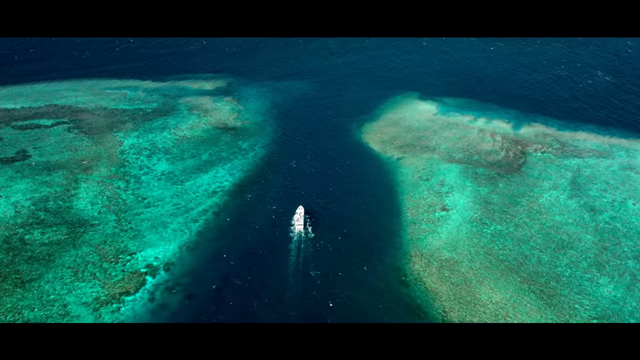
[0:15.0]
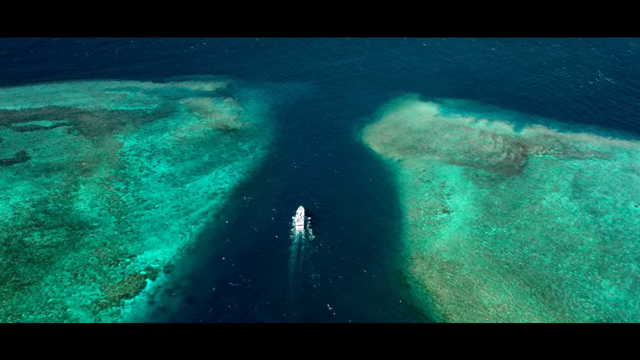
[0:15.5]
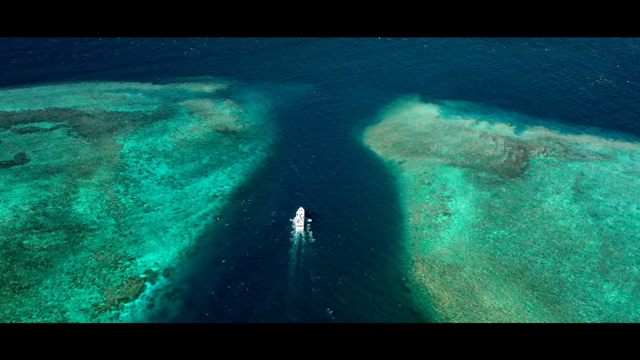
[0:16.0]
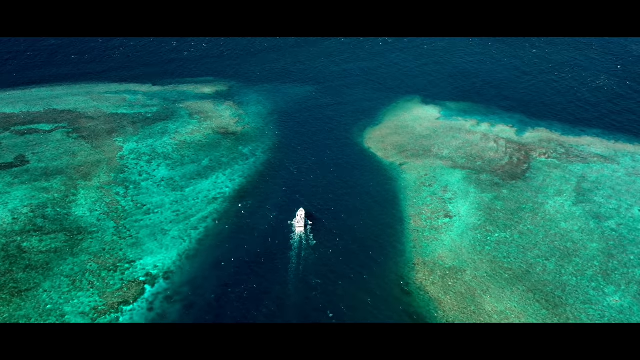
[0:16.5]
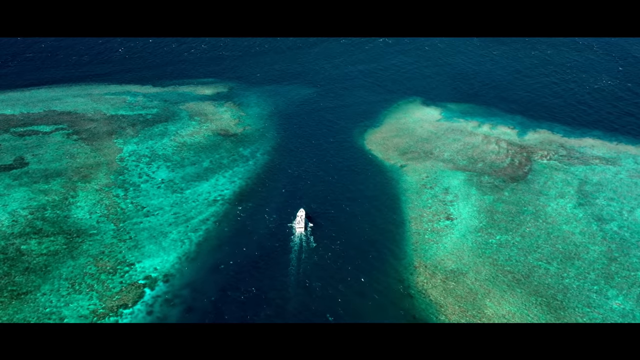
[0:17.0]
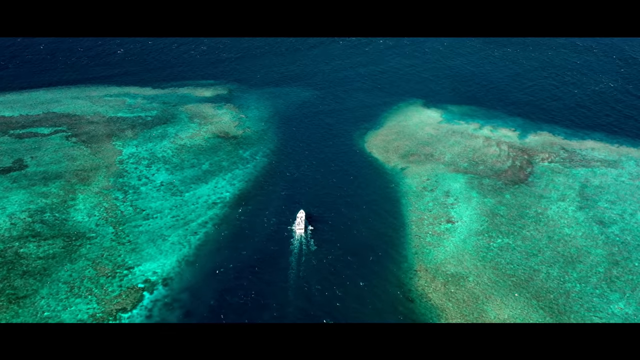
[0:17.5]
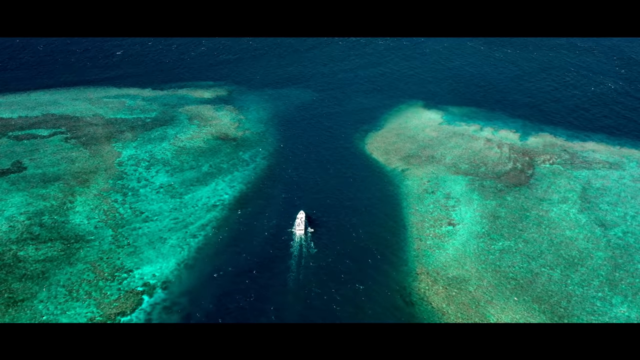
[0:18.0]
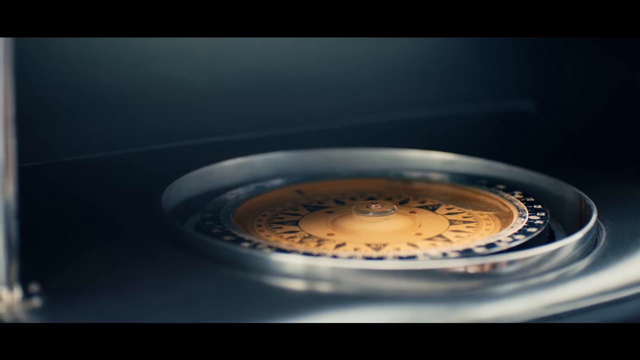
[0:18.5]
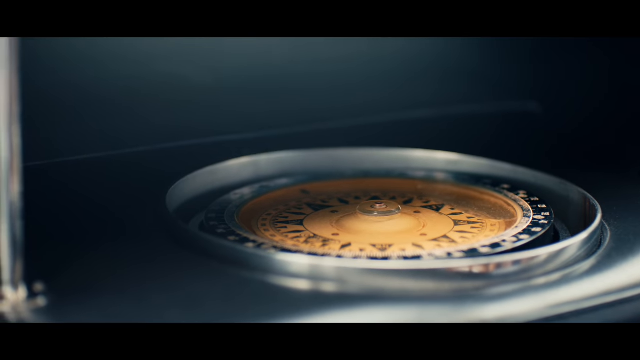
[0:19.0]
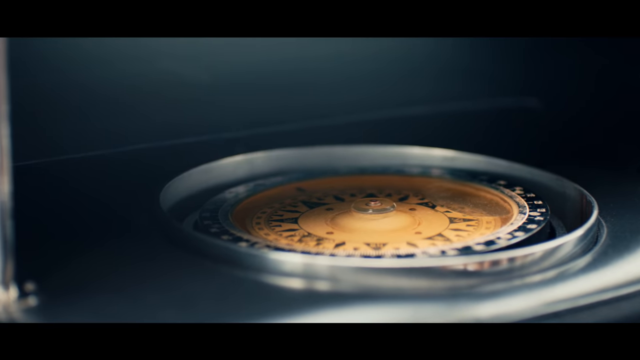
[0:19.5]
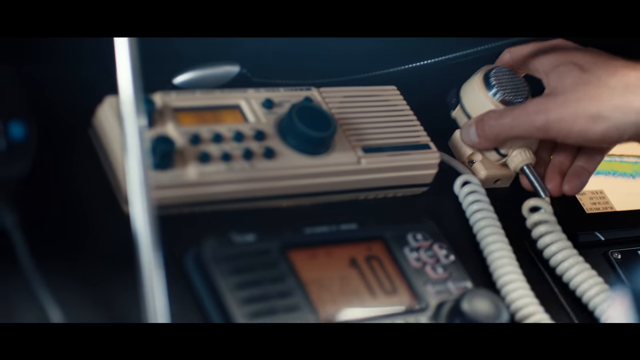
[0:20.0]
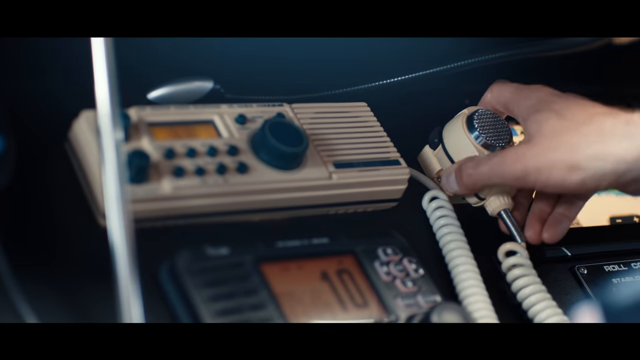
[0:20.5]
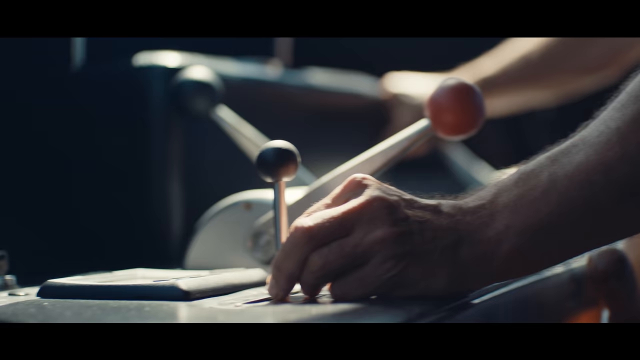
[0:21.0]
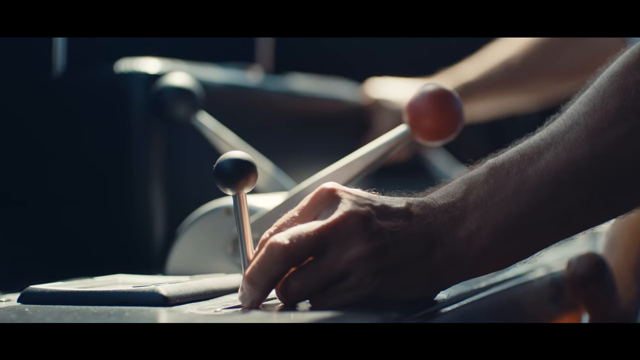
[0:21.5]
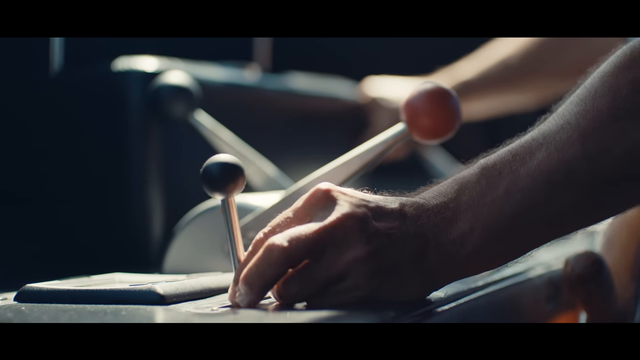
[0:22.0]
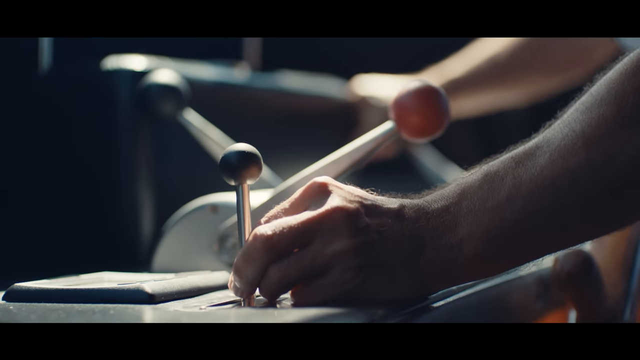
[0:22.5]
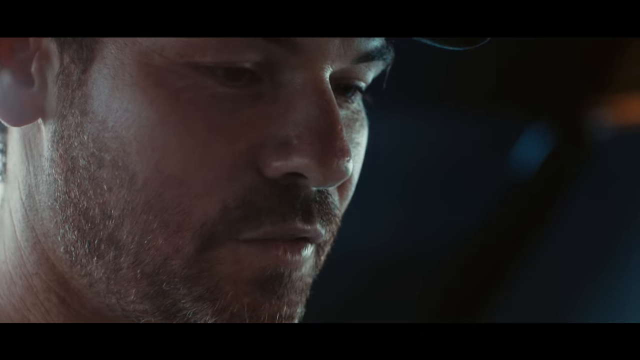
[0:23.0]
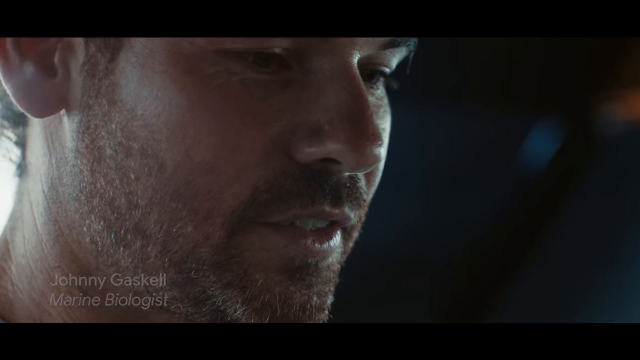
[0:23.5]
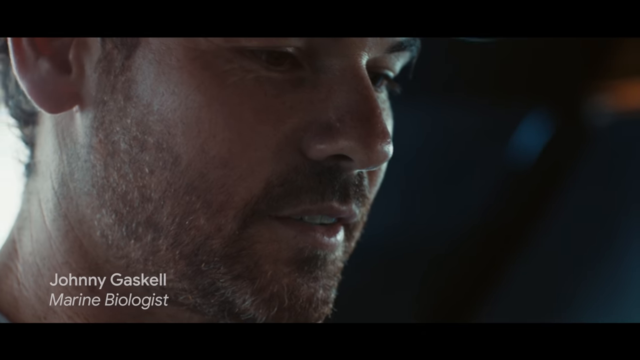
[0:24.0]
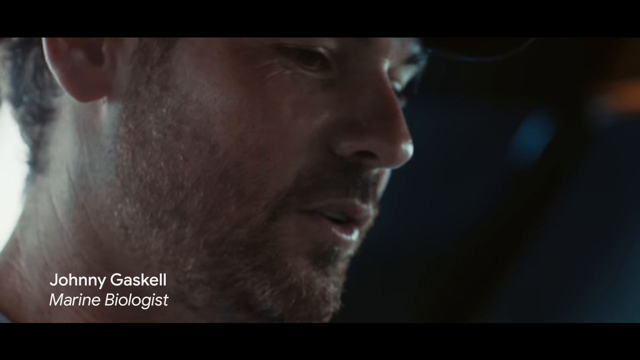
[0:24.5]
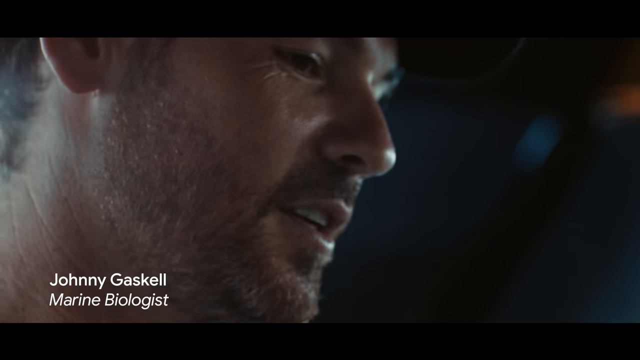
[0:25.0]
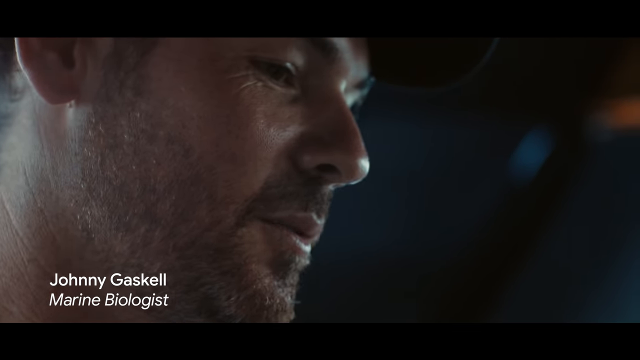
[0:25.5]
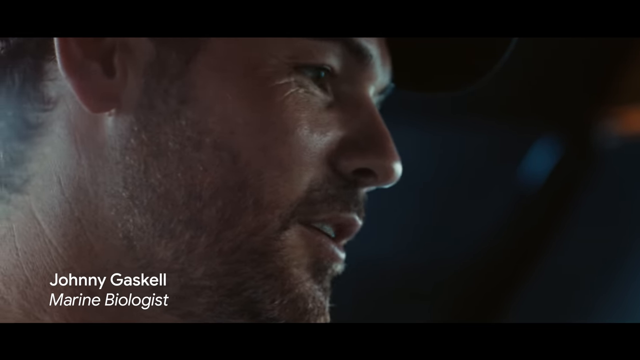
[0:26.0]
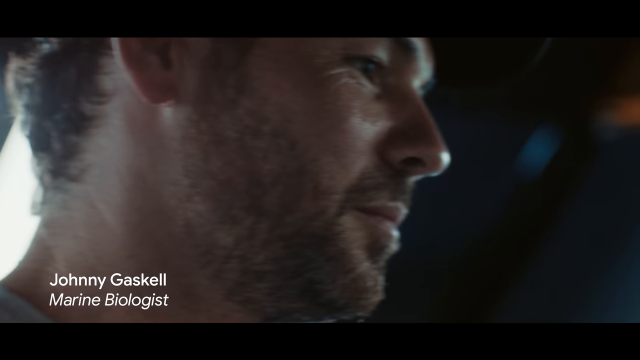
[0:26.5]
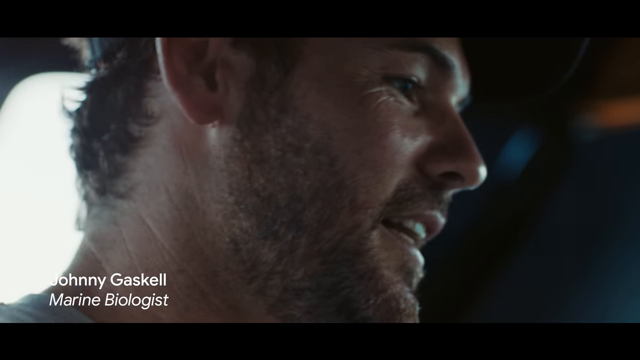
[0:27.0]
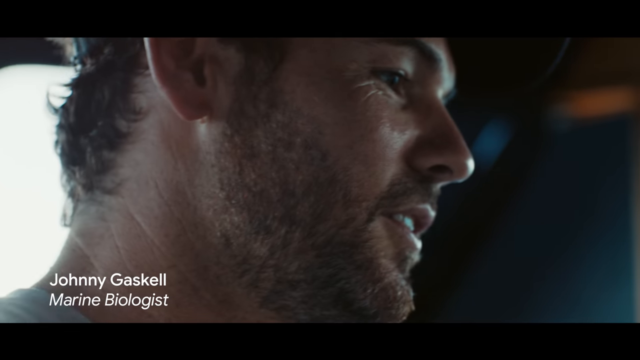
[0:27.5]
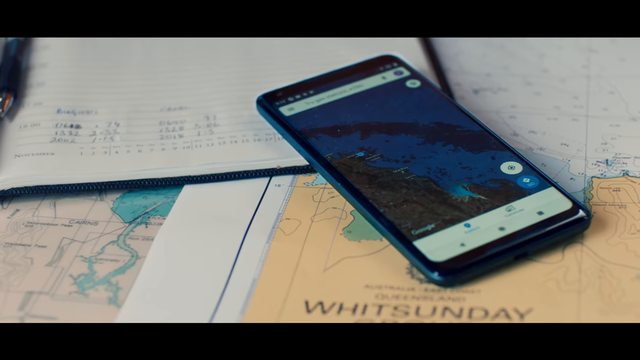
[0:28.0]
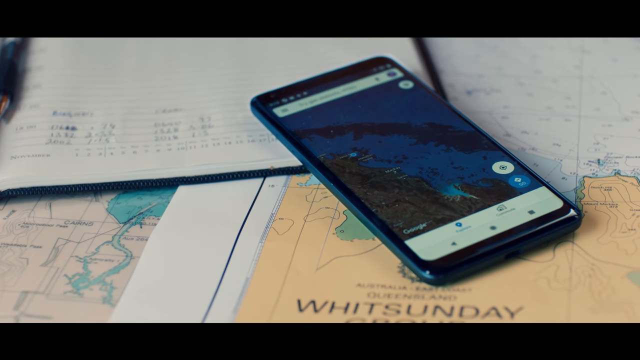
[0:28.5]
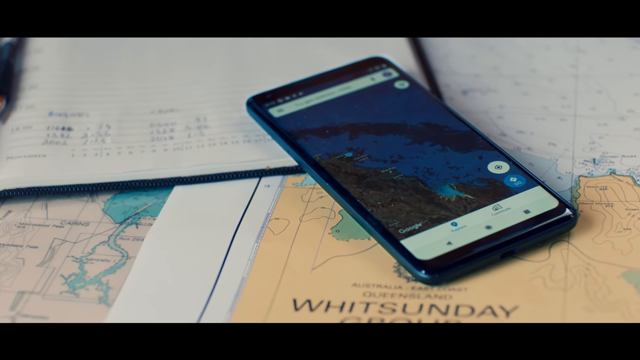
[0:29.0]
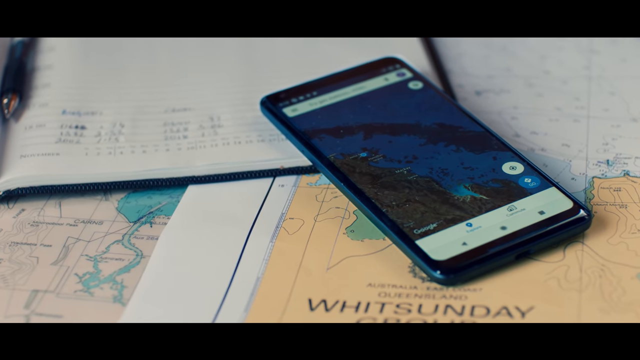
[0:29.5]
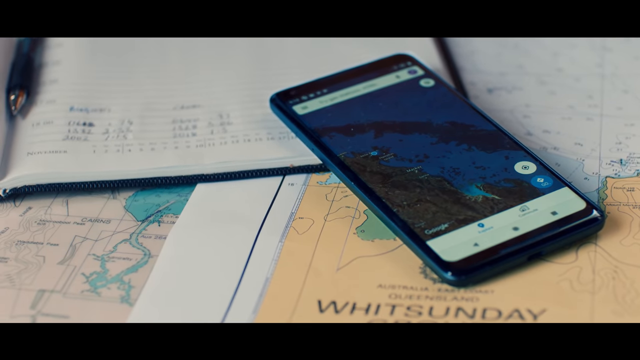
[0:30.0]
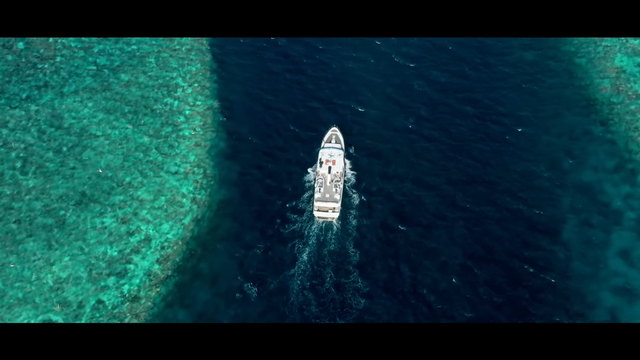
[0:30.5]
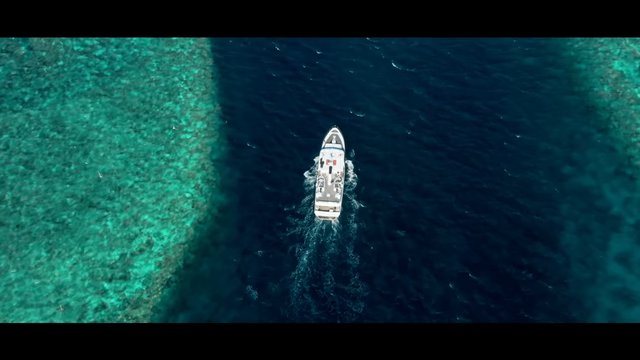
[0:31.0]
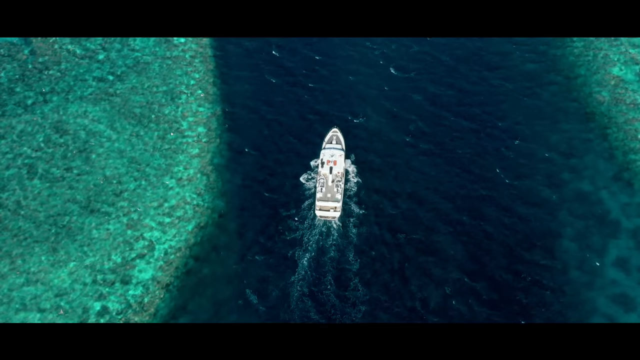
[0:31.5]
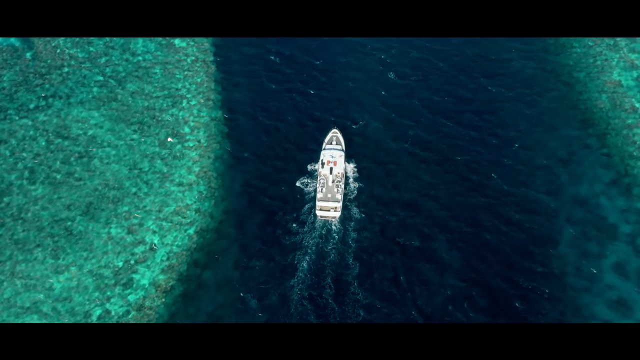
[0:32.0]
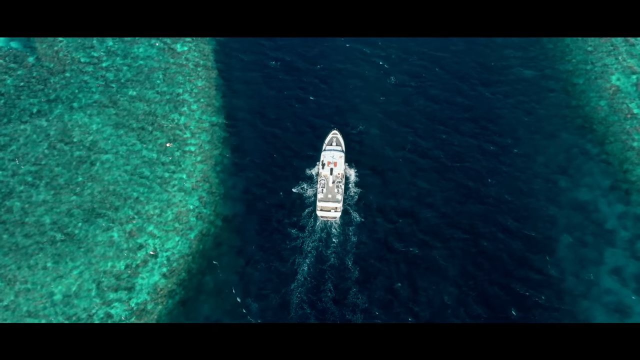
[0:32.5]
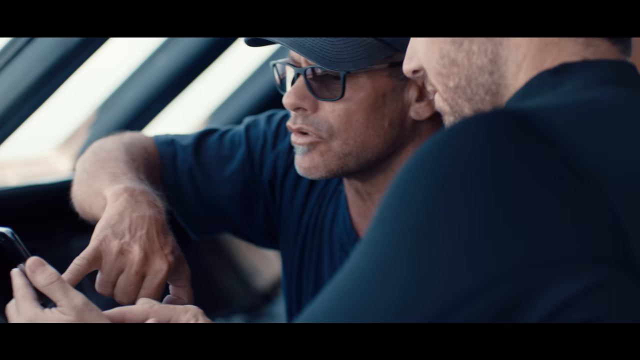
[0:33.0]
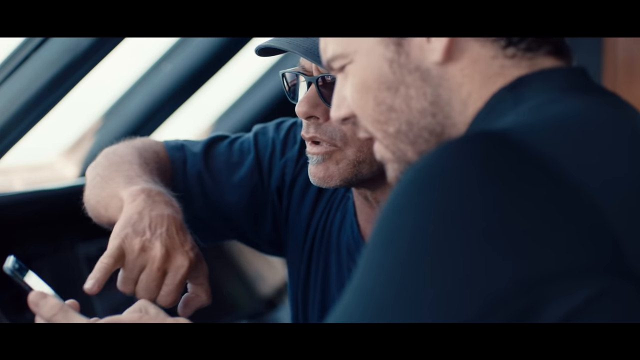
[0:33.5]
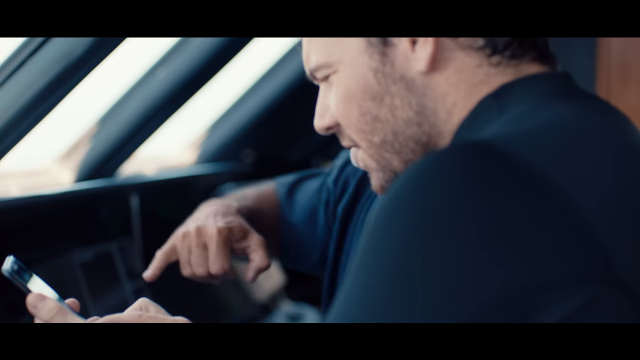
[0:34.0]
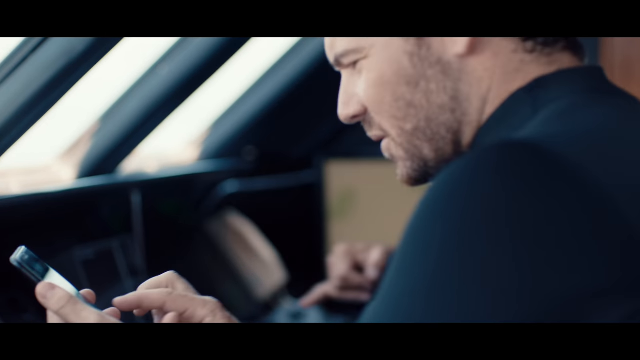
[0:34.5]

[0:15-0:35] White text at the top reads "finding blue holes with Google Maps." A ship is in the water. The marine biologist Johnny Gaskell appears: a middle-aged Caucasian man with short brown hair and a short trimmed beard. They are sailing between two sandbars. A compass embedded on the ship shifts around; it looks like it has liquid inside to help balance it. A large ship cruises through the water at a slow pace. Two men are shown, the marine biologist and another man with slightly darker skin wearing a dark blue t-shirt. They look at a phone screen, pointing at it and discussing it. They then guide the ship with the instrument panel, gears and pulleys. A phone lies on a table, with what look to be various maps underneath it.